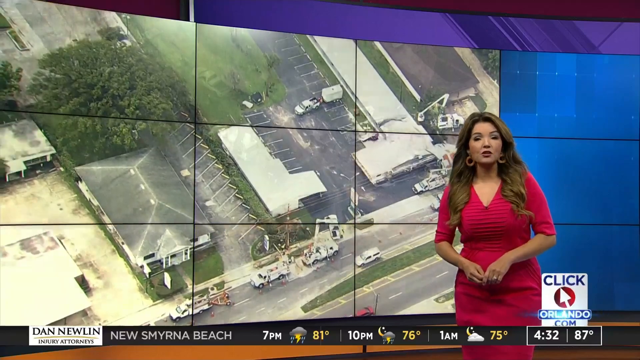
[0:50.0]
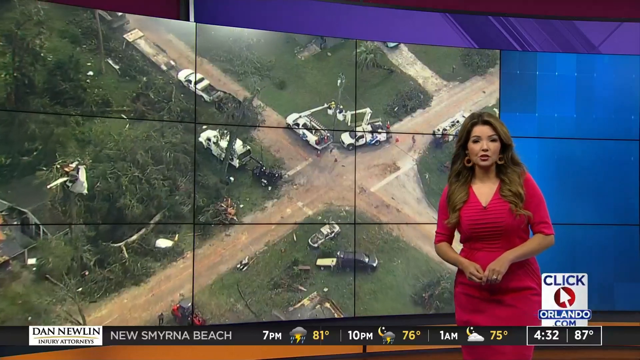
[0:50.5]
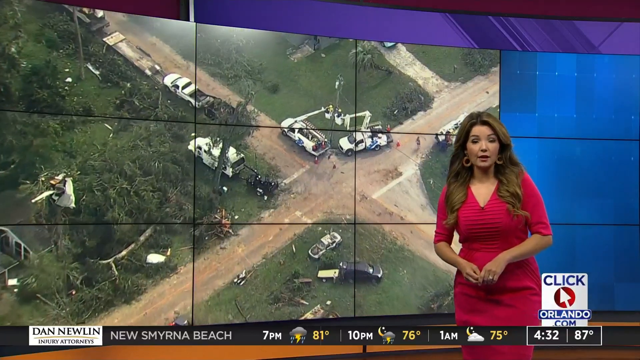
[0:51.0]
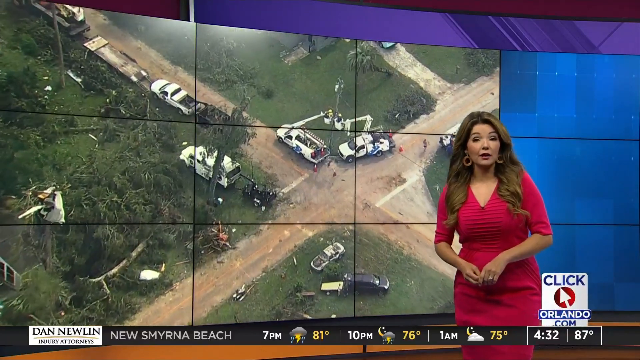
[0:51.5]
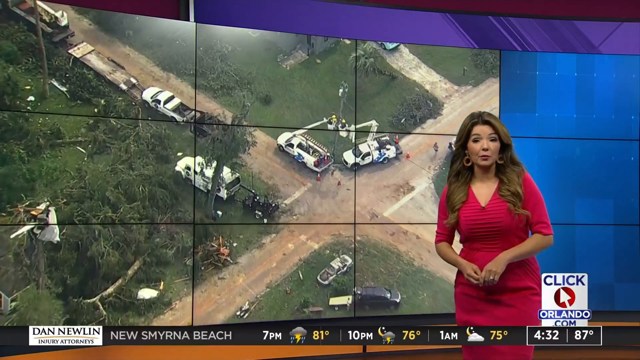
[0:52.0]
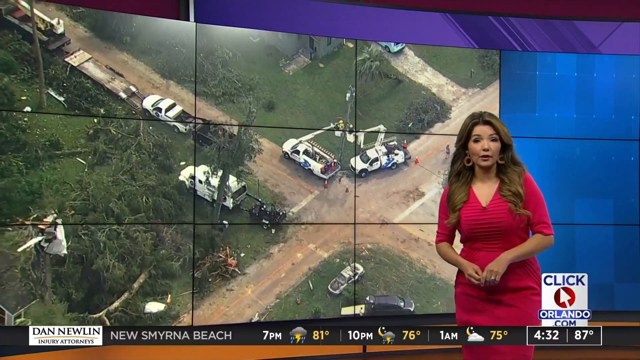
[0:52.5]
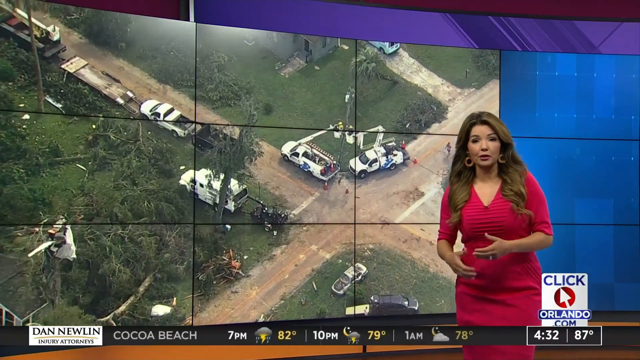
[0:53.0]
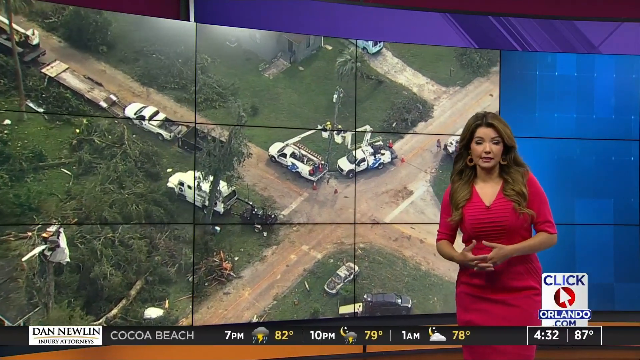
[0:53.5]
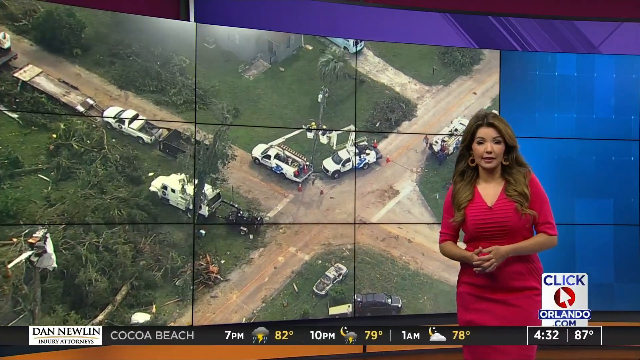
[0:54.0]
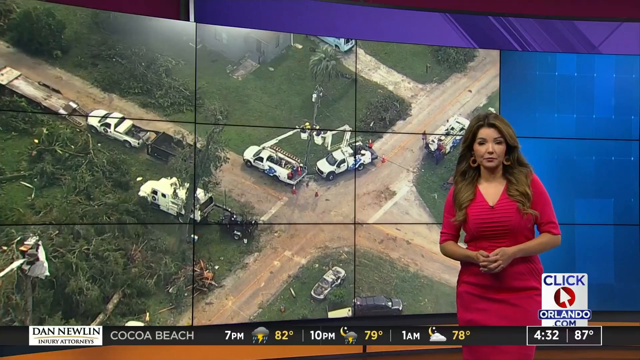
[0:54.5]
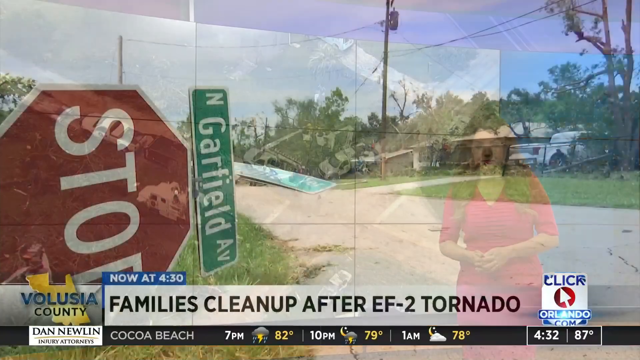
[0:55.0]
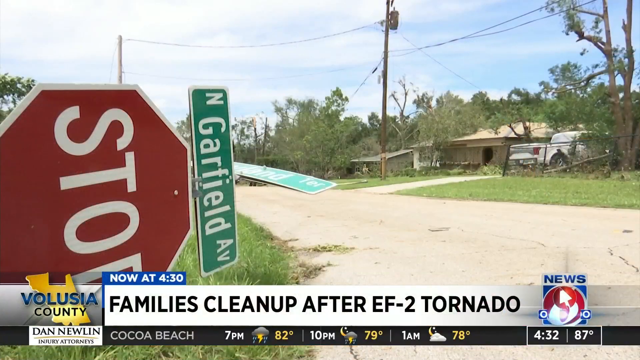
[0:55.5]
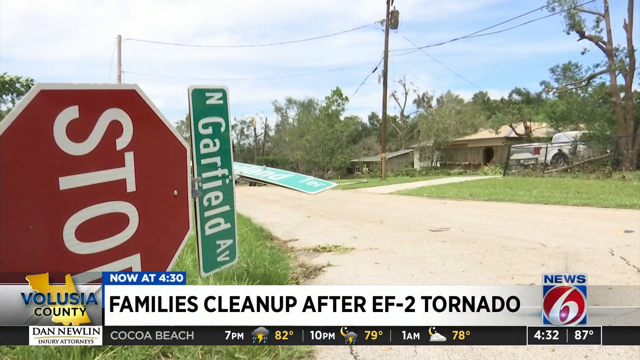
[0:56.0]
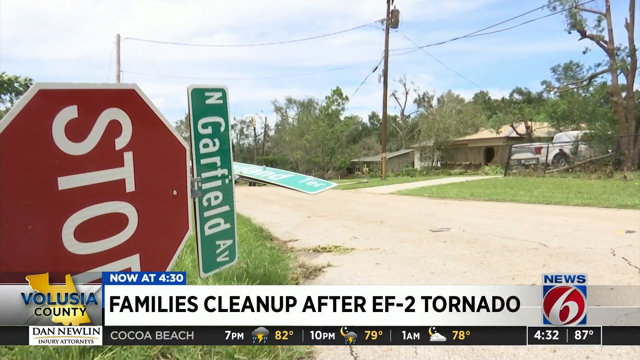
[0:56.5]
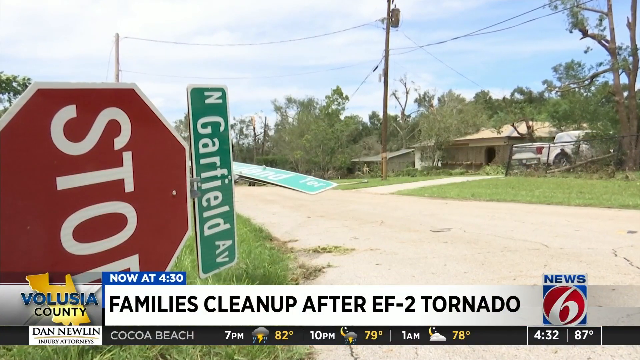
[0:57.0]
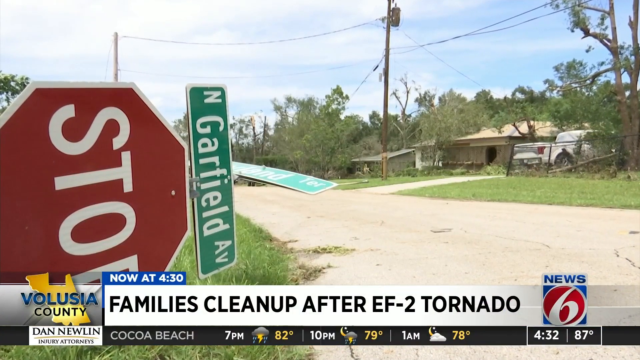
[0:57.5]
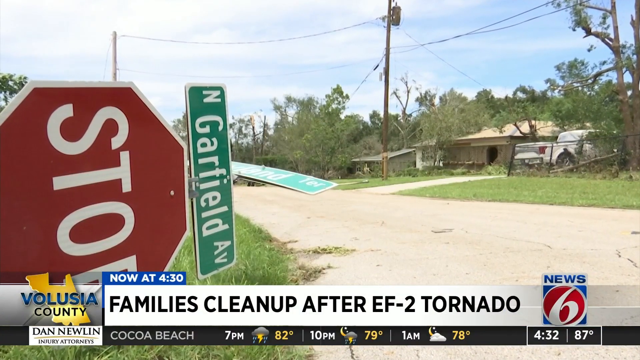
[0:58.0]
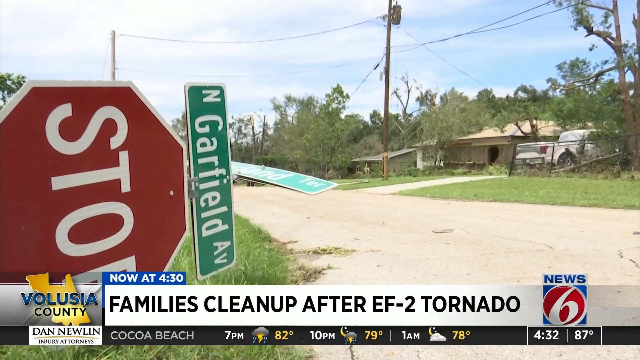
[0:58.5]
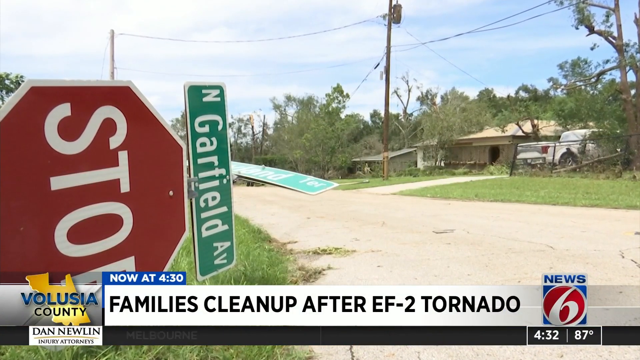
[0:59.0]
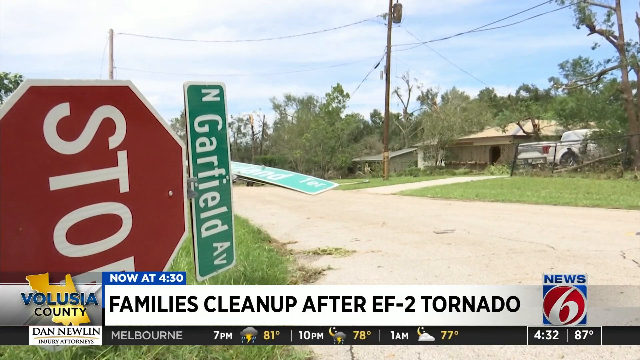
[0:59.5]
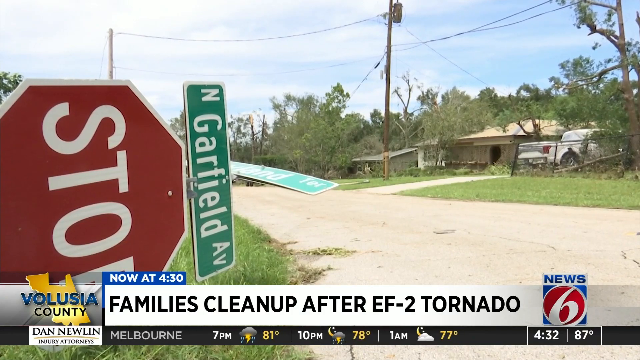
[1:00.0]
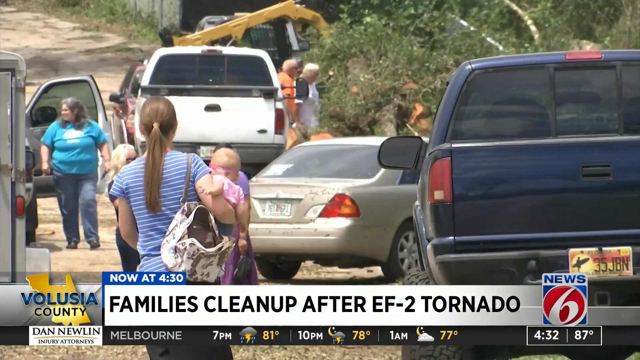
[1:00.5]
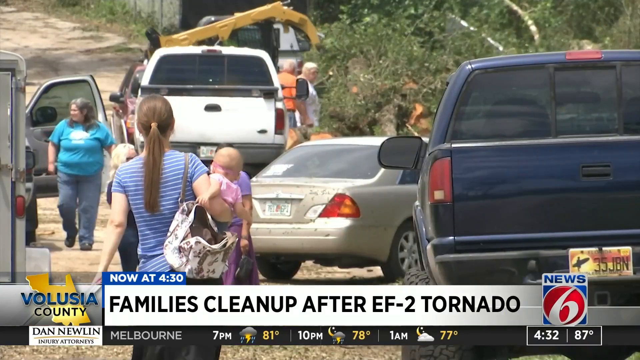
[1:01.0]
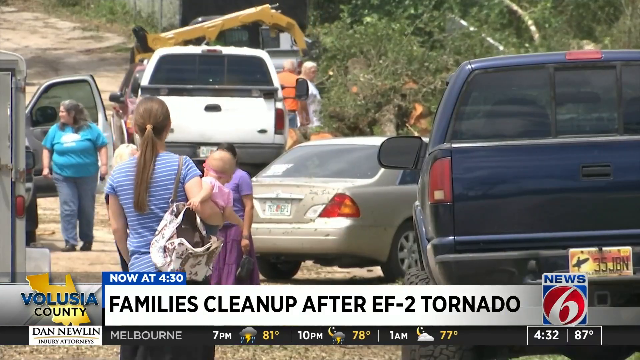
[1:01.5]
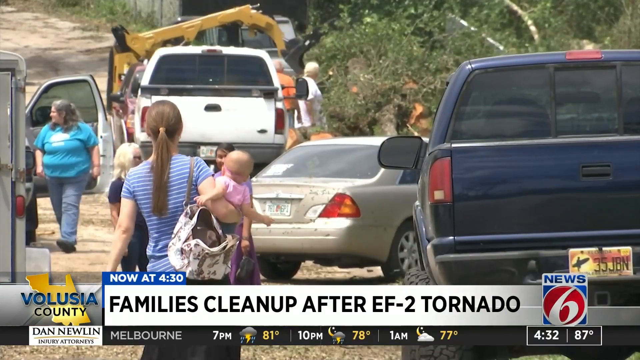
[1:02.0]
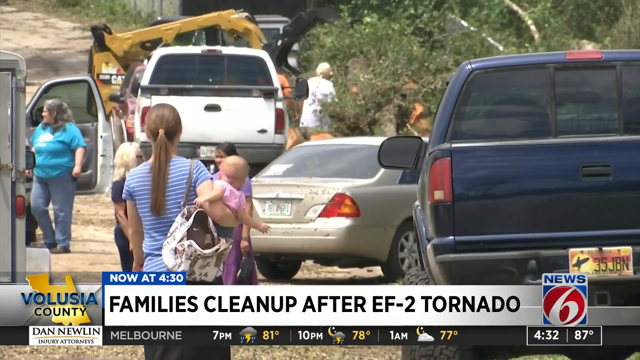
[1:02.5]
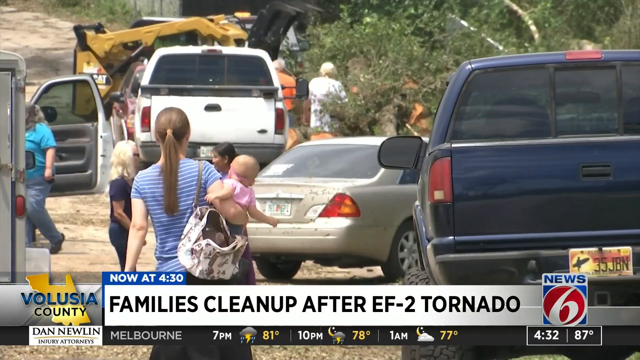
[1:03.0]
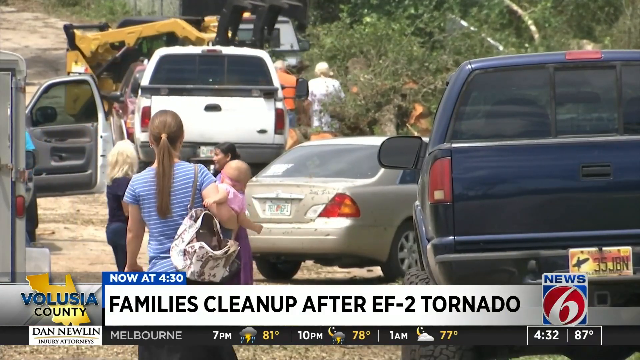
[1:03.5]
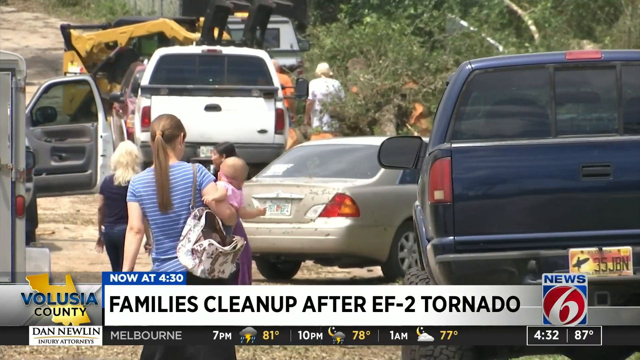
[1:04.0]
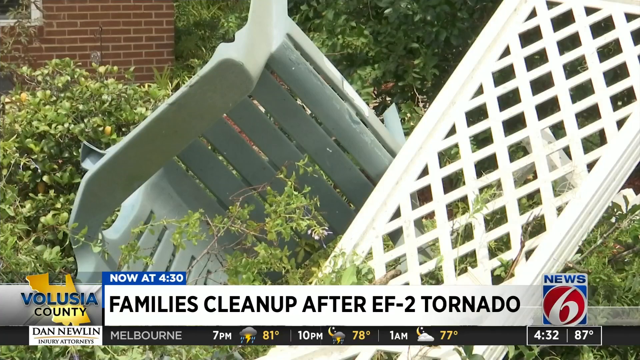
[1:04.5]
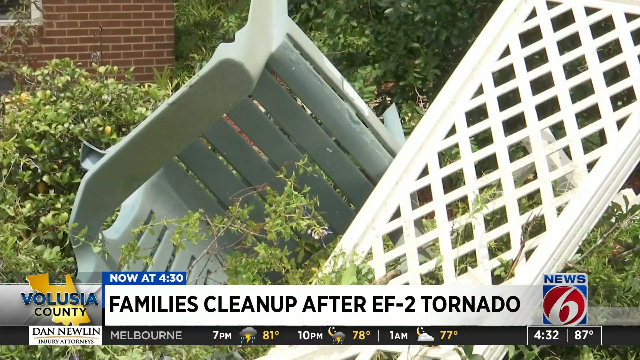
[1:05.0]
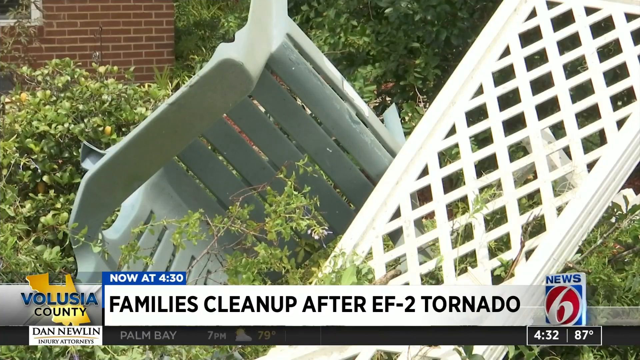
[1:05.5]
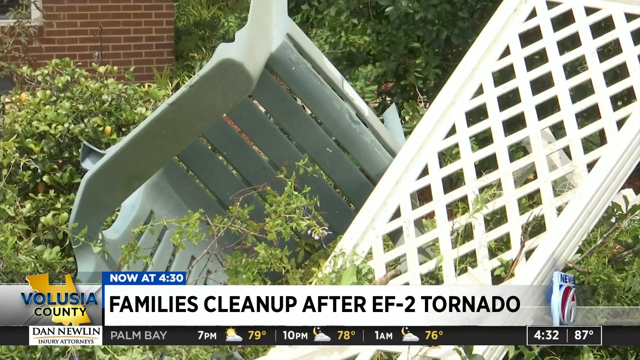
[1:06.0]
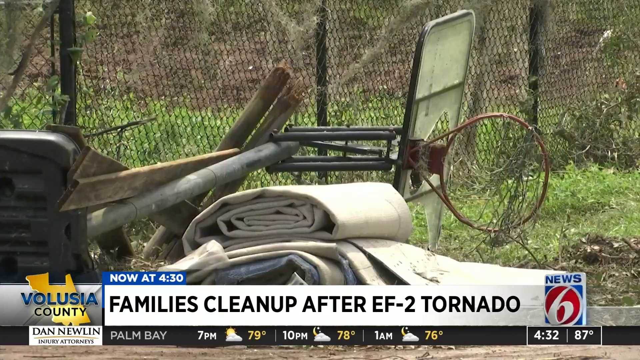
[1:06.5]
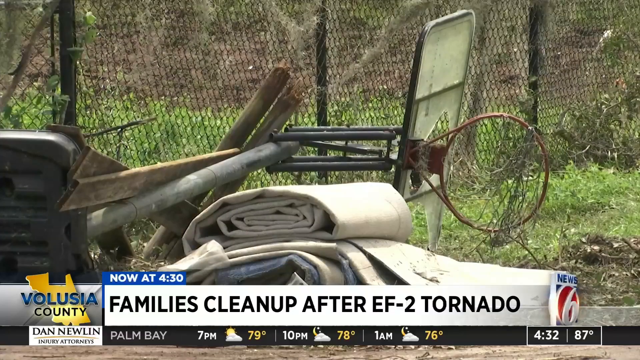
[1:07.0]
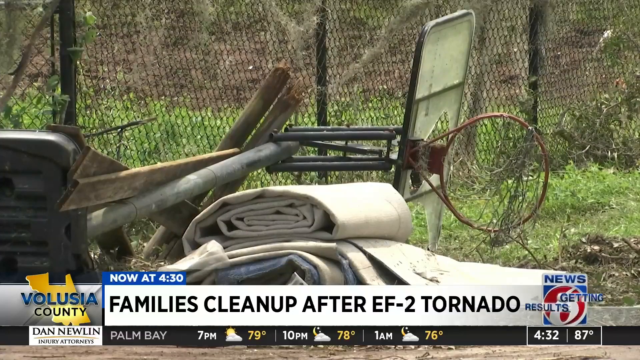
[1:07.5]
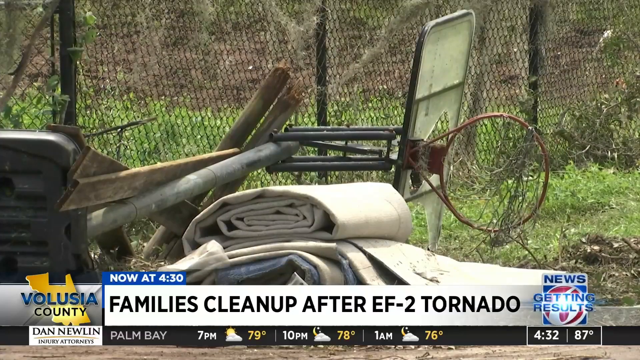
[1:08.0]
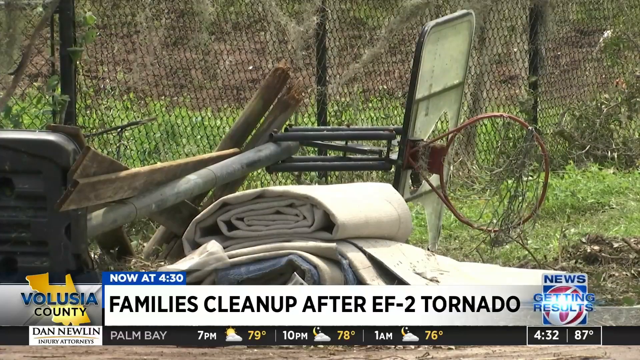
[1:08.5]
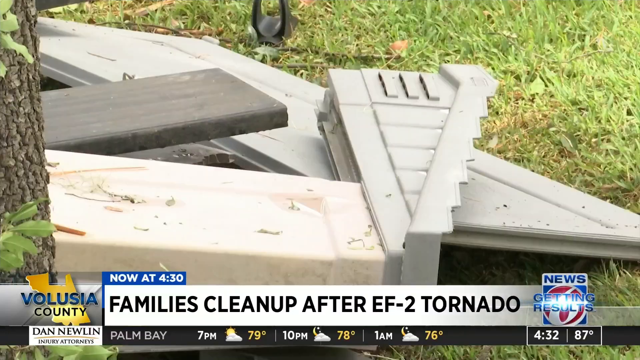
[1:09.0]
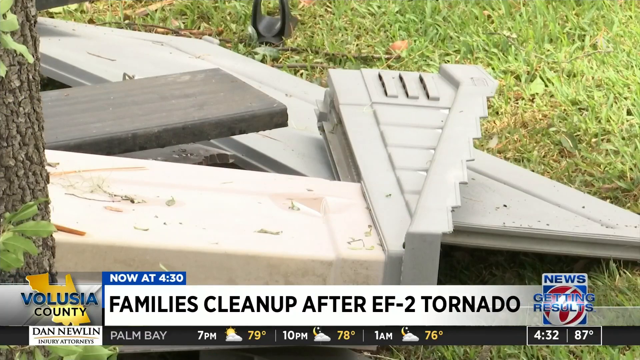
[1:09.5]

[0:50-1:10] The reporter in the red dress wears big hoop earrings. A screen shows power poles, power trucks and damaged cars, along with what almost looks like a dirt road intersection and several trees in an aerial view. "clickorlando.com" appears in the corner of the box, and there is an arrow button. A sign reads "North Garthrope Avenue". Roads and power lines appear, with the camera held level. A woman walks holding a baby, and a chubby woman walks by. In the background there is a car, and there are a white truck, a gold car and a blue truck. A blonde-haired woman talks to somebody. A bobcat is in the back. Chairs are flipped over, a basketball hoop lies on its side, and there is carpeting and debris, including what may be metal steps.